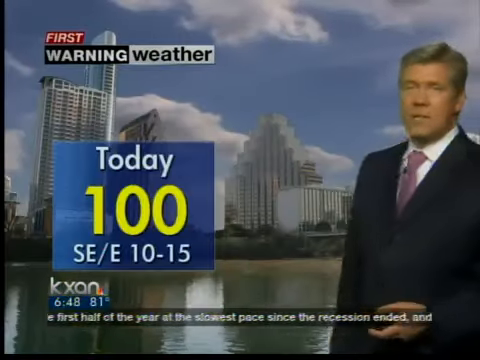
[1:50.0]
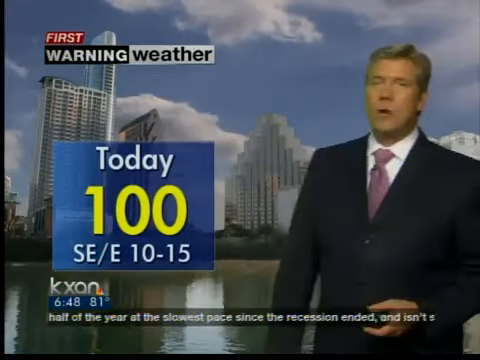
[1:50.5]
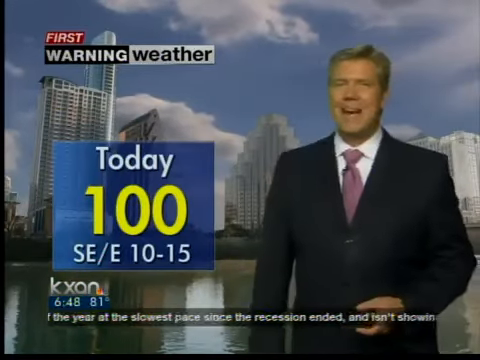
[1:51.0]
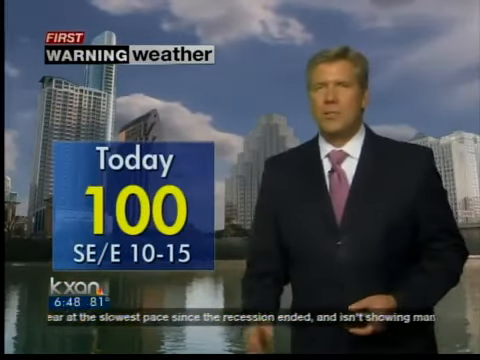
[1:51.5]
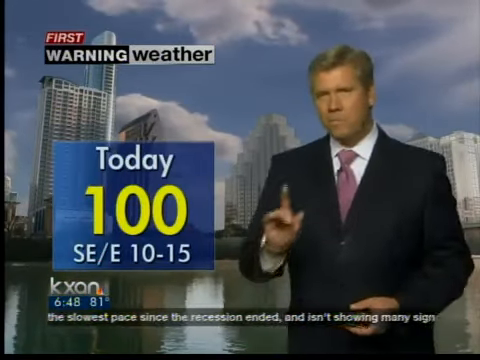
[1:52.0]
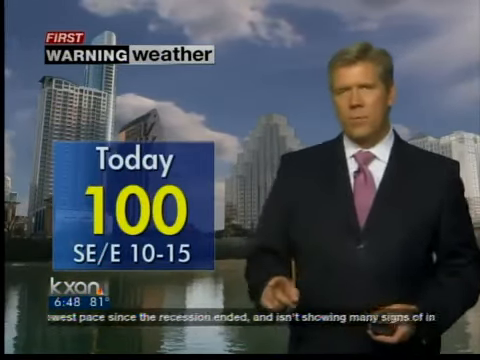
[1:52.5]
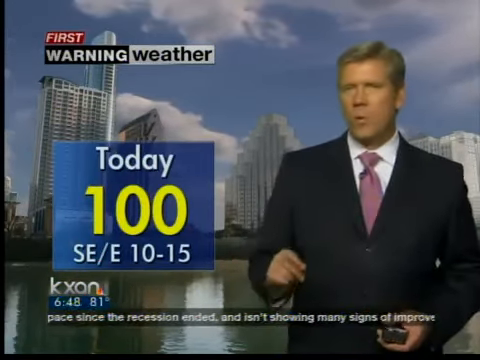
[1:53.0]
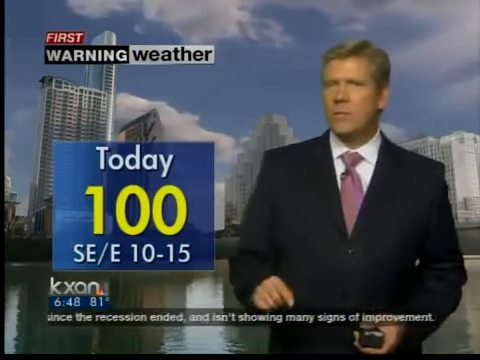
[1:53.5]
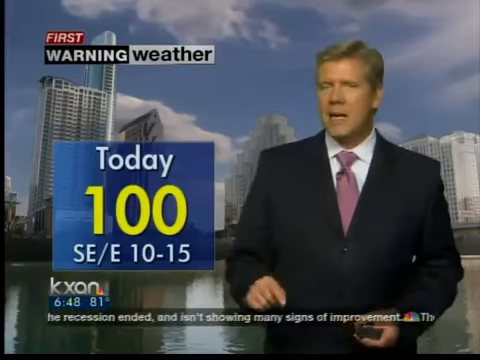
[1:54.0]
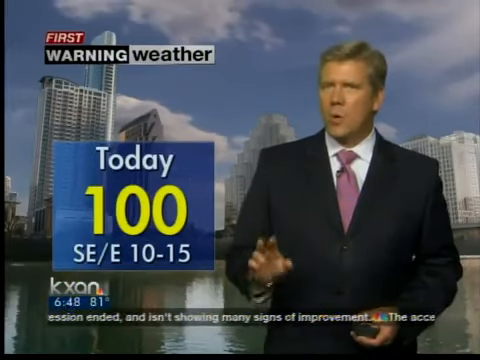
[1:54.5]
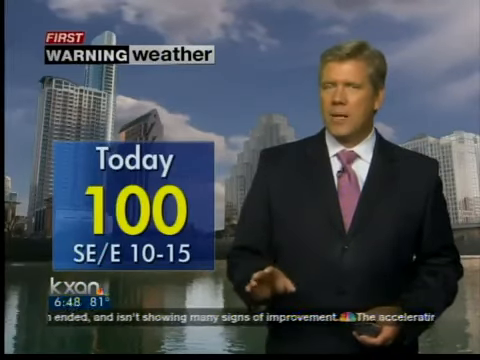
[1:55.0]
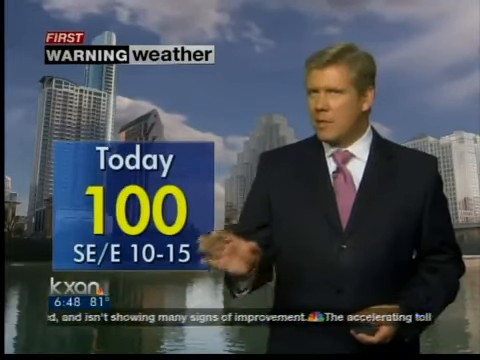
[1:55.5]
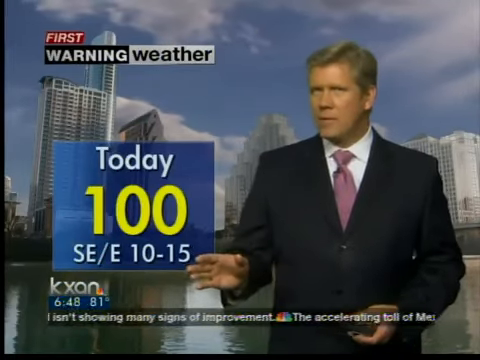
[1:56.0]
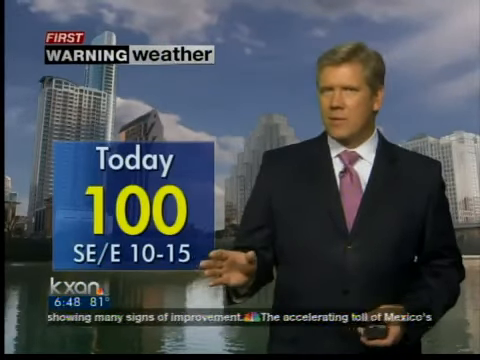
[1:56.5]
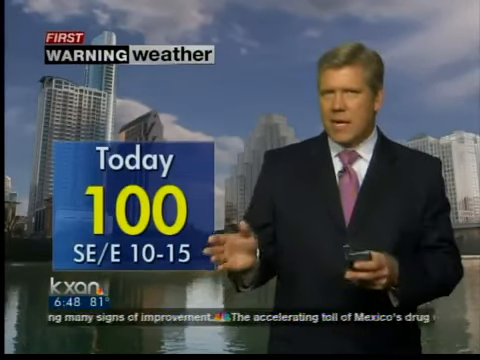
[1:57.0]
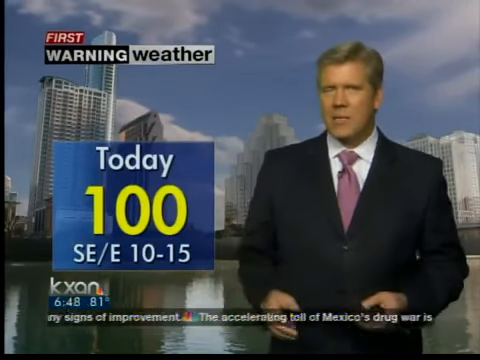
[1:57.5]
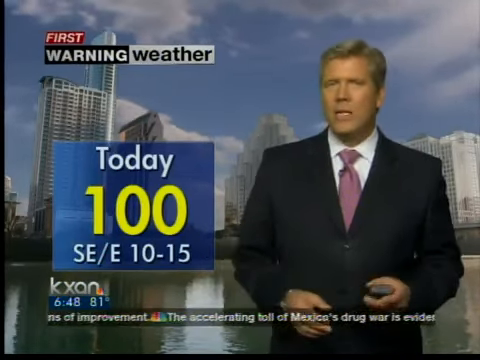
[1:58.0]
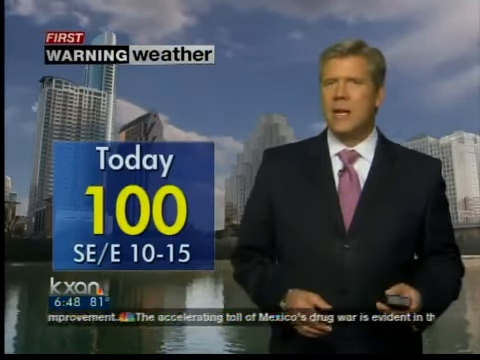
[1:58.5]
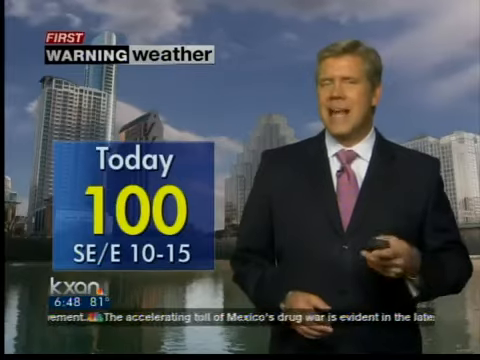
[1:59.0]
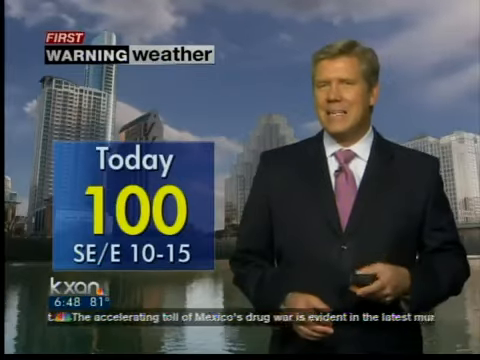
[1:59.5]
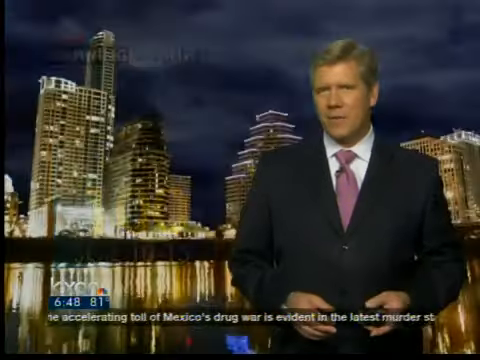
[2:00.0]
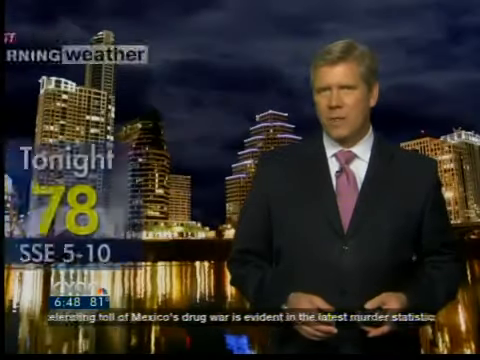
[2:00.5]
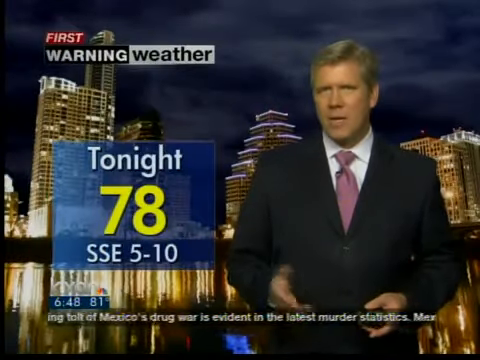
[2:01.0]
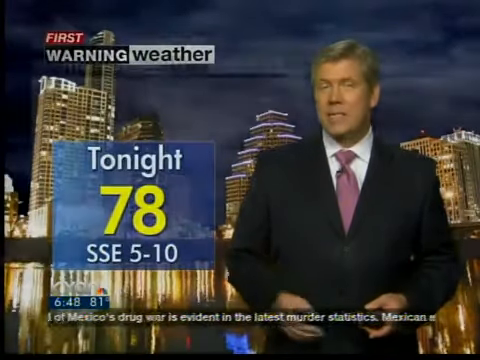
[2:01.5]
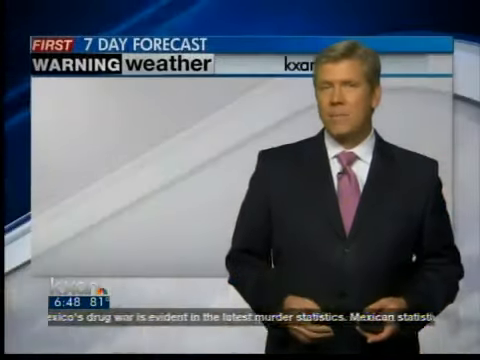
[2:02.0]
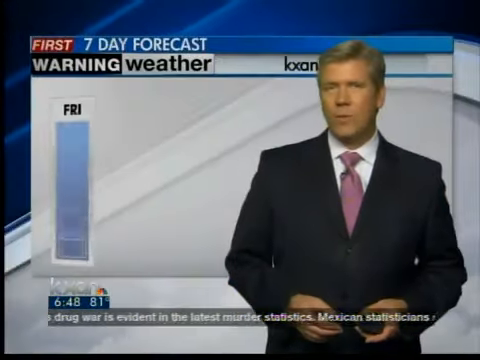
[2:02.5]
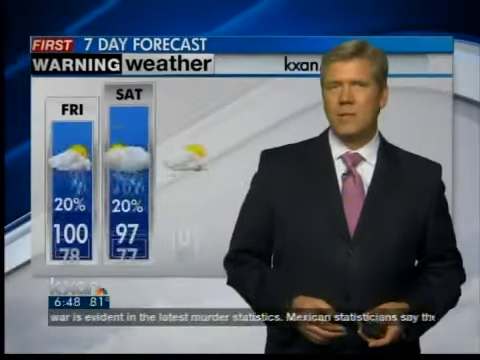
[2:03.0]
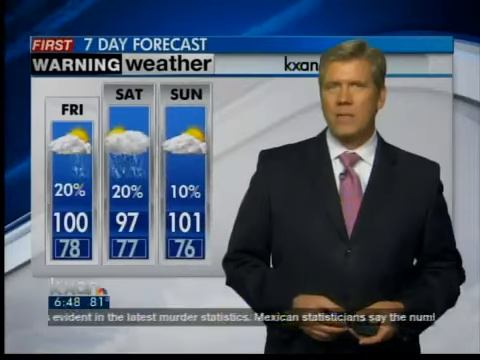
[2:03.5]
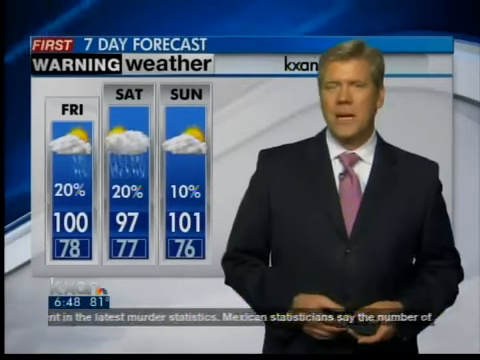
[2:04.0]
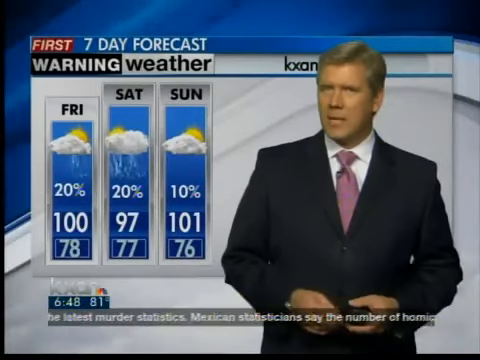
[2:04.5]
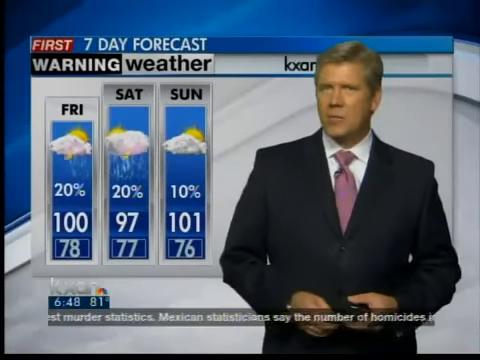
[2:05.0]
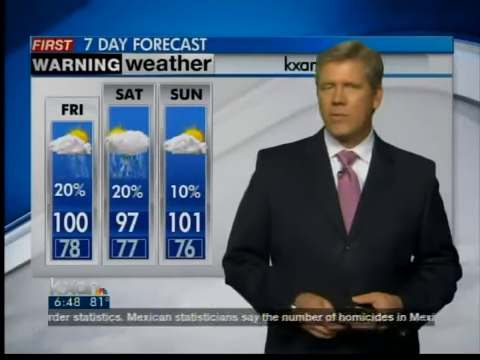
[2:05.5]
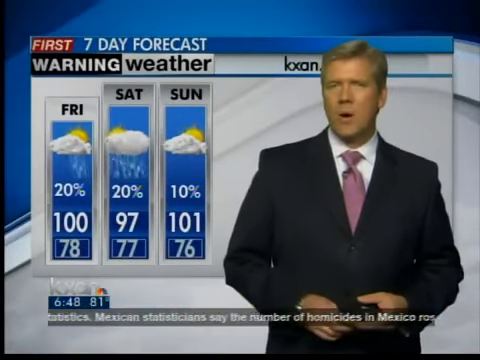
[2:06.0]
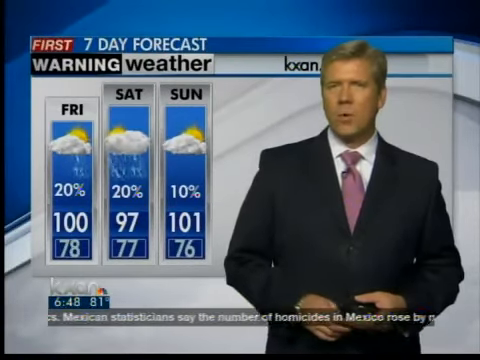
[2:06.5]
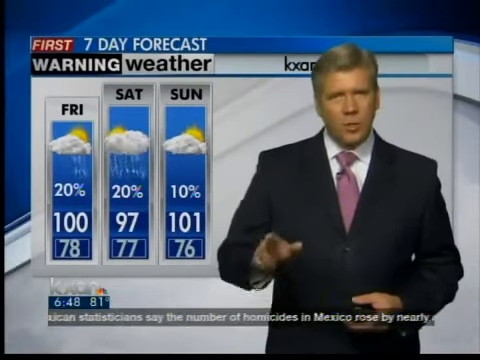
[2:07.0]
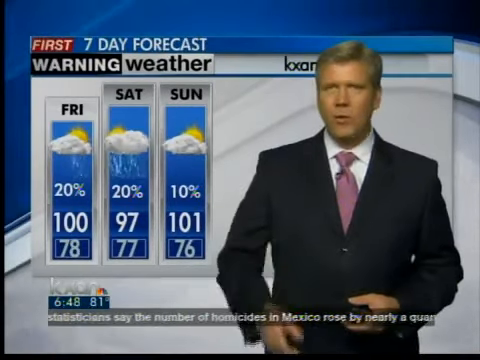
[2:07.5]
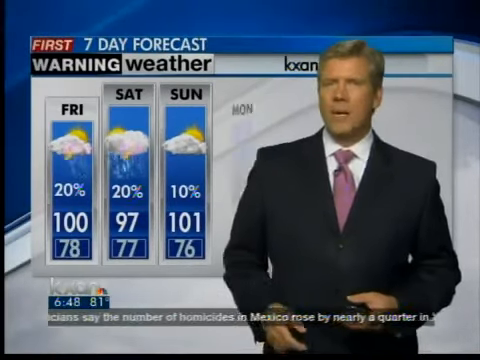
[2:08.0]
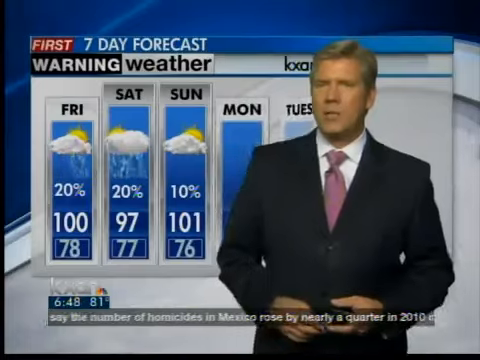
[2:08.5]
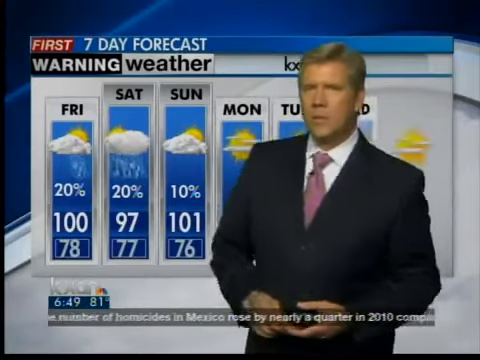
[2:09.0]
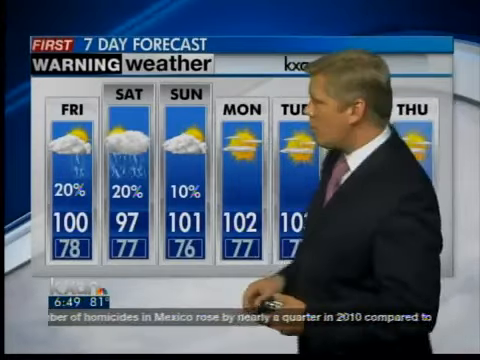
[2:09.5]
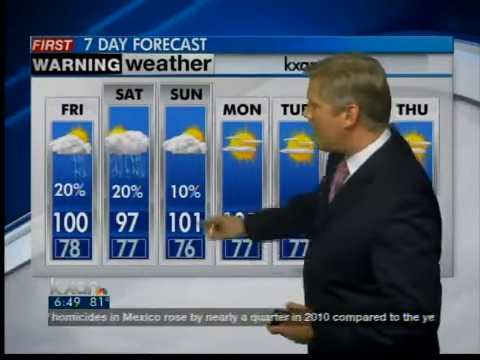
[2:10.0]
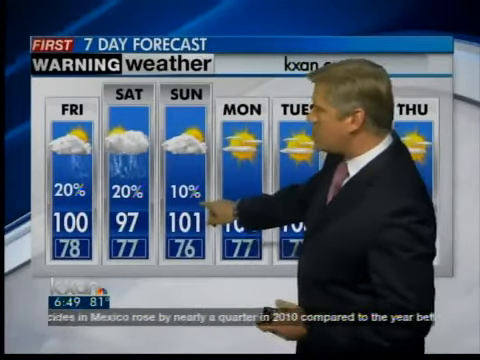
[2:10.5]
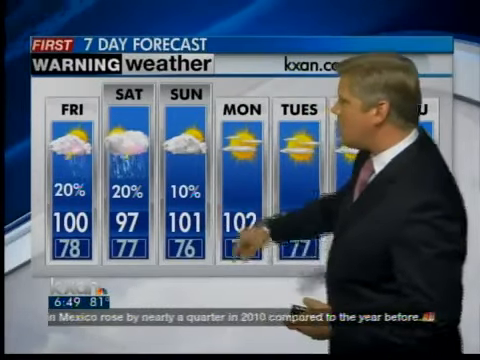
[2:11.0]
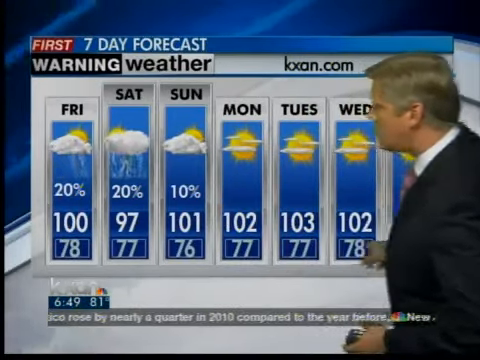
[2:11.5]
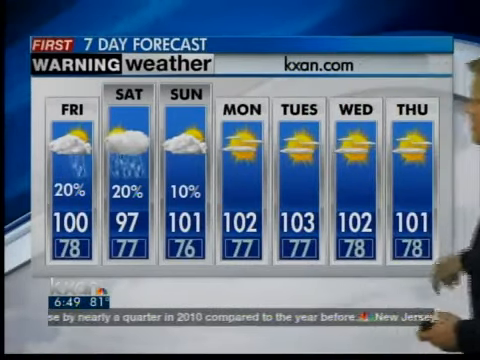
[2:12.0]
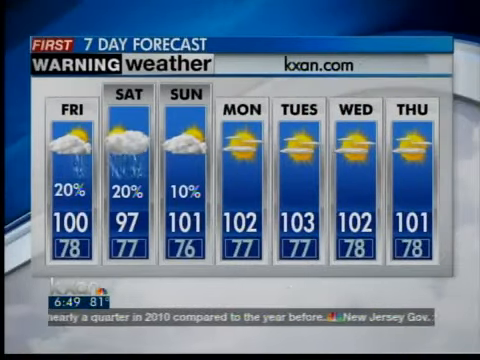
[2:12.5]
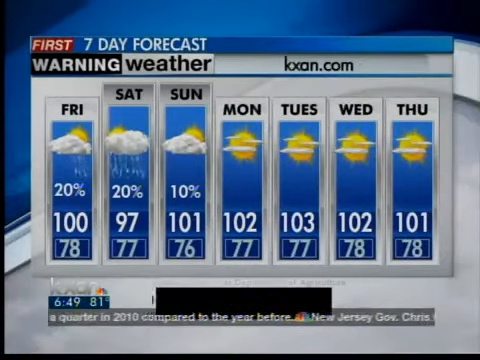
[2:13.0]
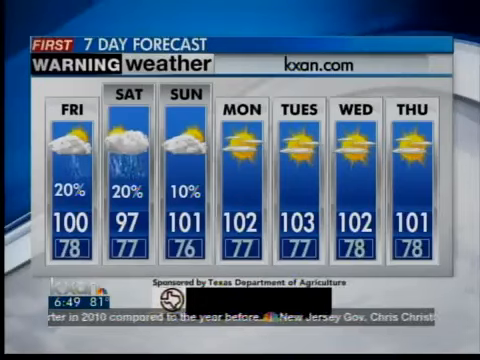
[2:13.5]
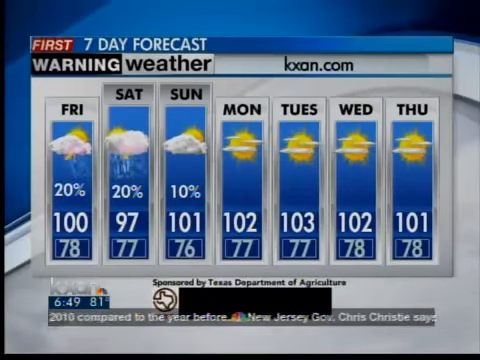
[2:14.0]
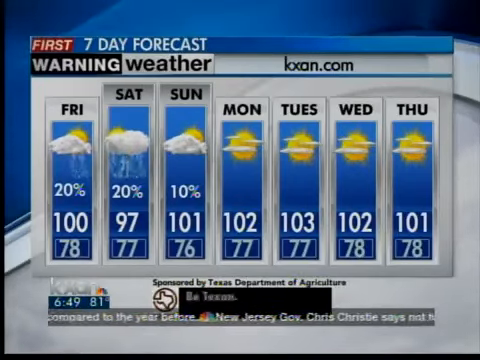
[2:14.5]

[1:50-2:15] The scene fades into a picture of a city with a few skyscrapers on some land above a pond, with the pond in the foreground. "First warning weather" is still in the upper left corner. Below it, a transparent blue rectangle says "today" in white, then "100" in large yellow text, and under that "SE/E" and "10-15." The weatherman looks at the viewer and smiles while talking a little more. He lifts his right hand with his index finger pointing out, then points it down. He flattens his hand, points it downward, and turns his wrist so it is oriented vertically. Then he shakes both hands a little. As he continues to speak, the cityscape turns to a night version of the same perspective, with all the buildings glowing with lights that also shine across the pond. The first warning weather graphic and the blue square both go off screen and come back on, the blue square now reading "tonight, 78, S/SE, 510." The scene then fades into the earlier blue and white screen with a wave pattern. Above it is a blue and white square with "first seven day forecast" and "warning weather." A three-day forecast for Friday, Saturday, and Sunday appears in a vertical bar pattern. Friday shows sun and a raining cloud with thunderstorms briefly coming out; Saturday shows the same with a little less sun; Sunday is just a cloud with sun. Under these graphics are 20% for Friday, 20% for Saturday, and 10% for Sunday, and beneath those the highs: Friday 100, Saturday 97, Sunday 101. Below are the lows, enclosed by a white rectangle and slightly dimmed: 78 for Friday, 77 for Saturday, and 76 for Sunday. The Saturday rain cloud pours some more rain. Then the Monday, Tuesday, Wednesday, and Thursday forecasts appear, all showing the sun with some light clouds in front. Monday is 102, Tuesday 103, Wednesday 102, and Thursday 101, with lows of 77, 77, 78, and 78. Under that, a black rectangle expands and covers about the middle third of the screen. On its left side is the logo of the Texas Department of Agriculture, with "sponsored by Texas Department of Agriculture" above it. Then the words "be Texan" appear in the upper left of the black rectangle.